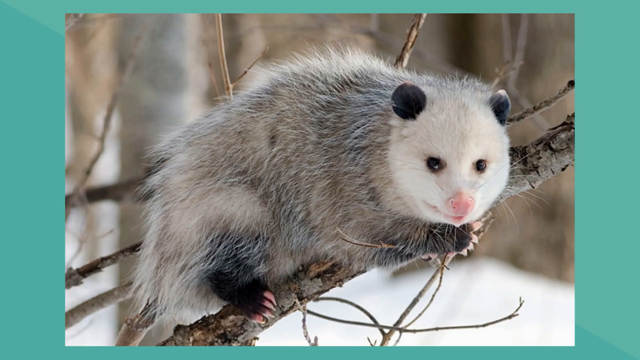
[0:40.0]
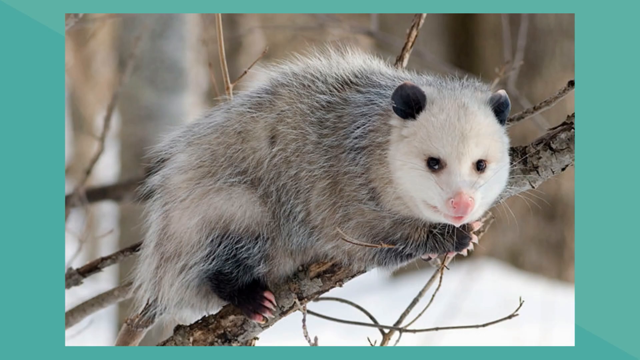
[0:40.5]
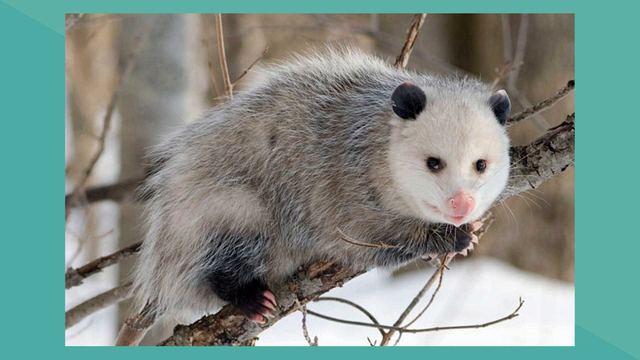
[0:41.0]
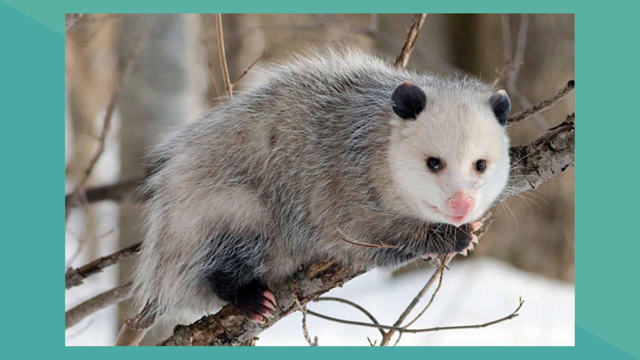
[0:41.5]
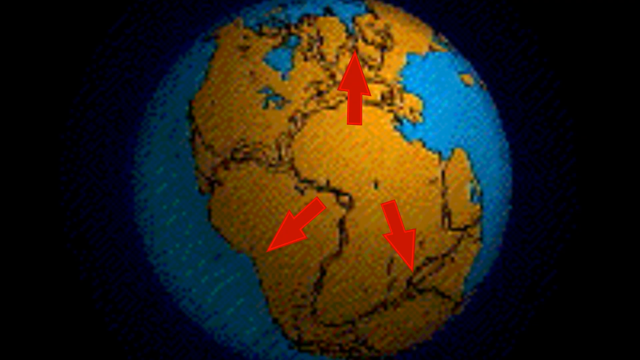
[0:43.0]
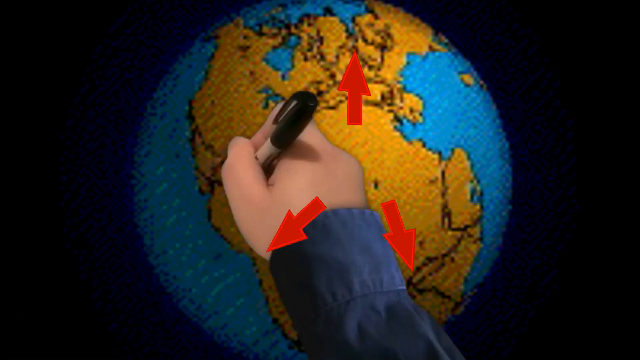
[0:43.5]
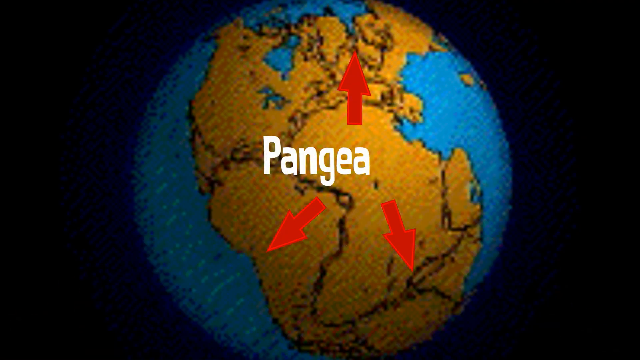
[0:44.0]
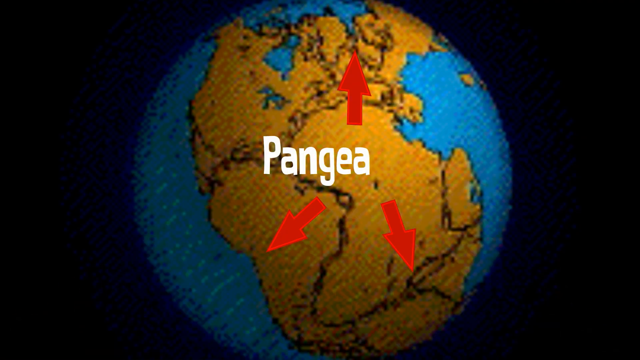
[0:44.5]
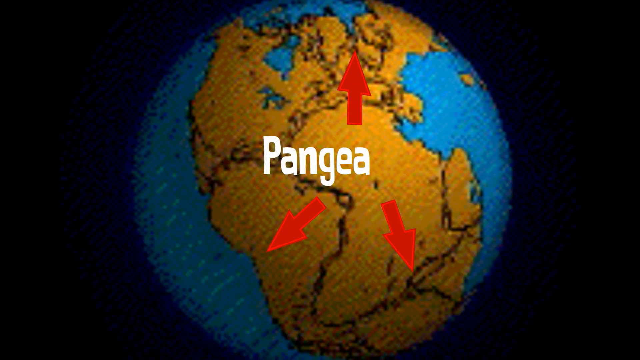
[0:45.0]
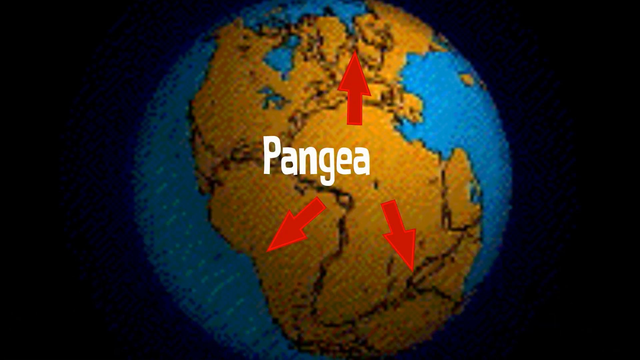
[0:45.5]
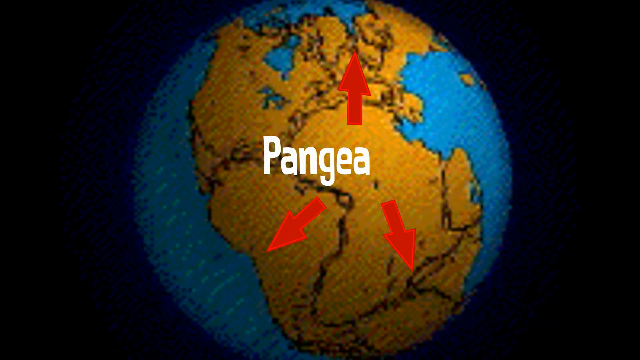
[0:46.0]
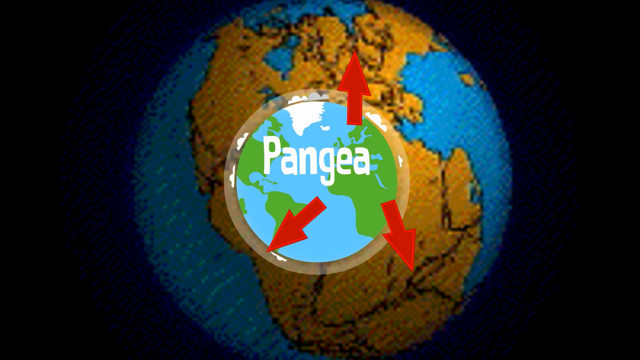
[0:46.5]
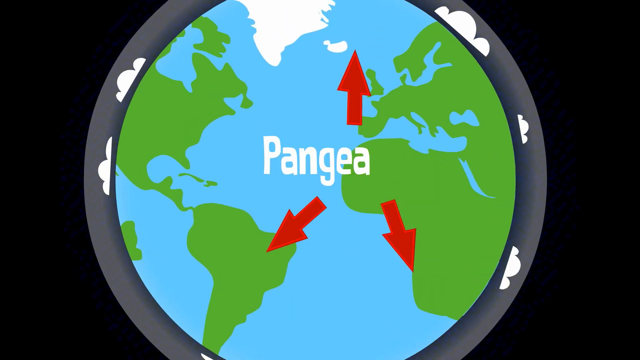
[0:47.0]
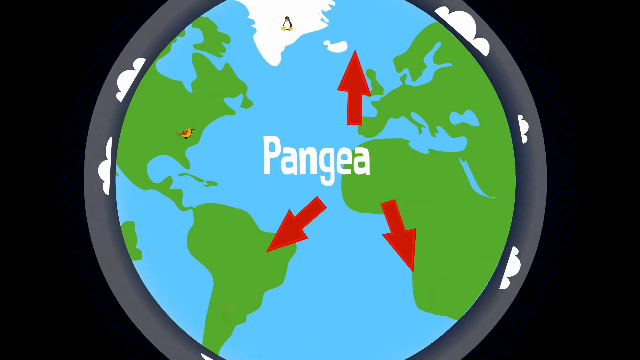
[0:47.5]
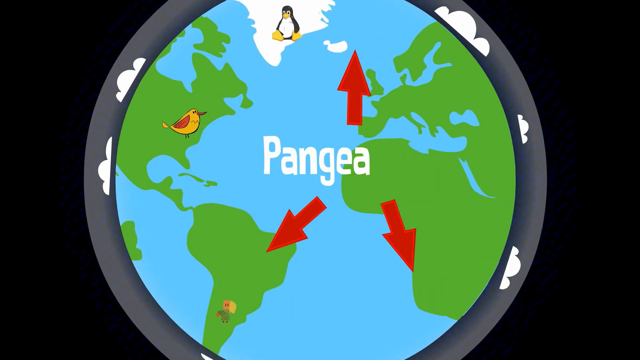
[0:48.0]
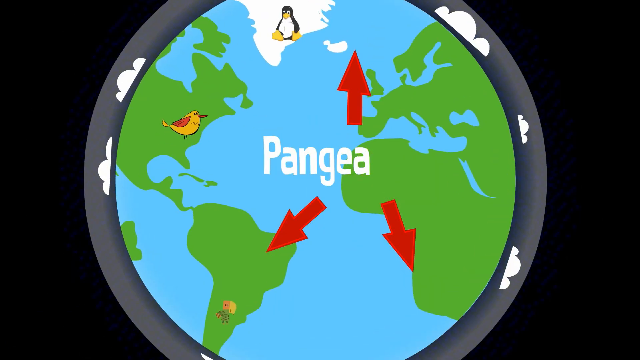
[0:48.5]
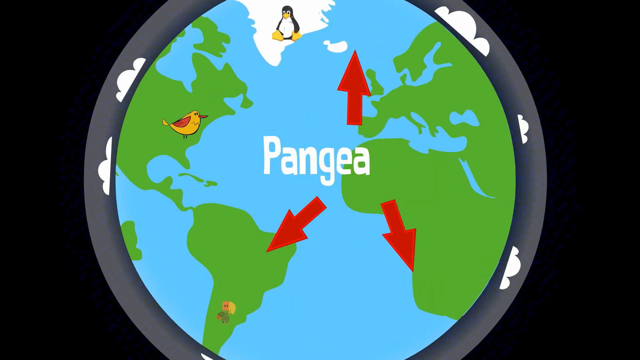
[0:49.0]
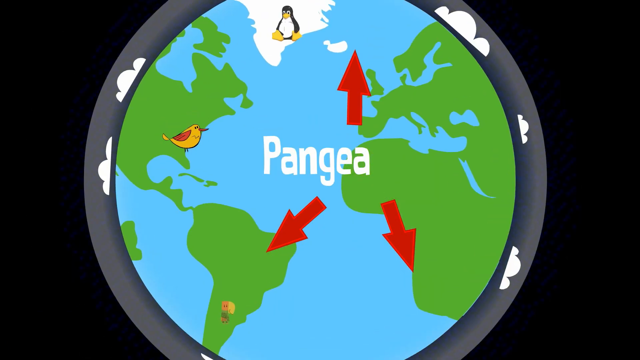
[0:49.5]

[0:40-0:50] An animal of some kind, possibly an opossum, is resting on a tree branch. It seems to be winter, since there is snow in the background, and the tree has no leaves. The animal is a greyish-brownish colour, with claws that are somewhat reddish and very extended, black eyes and a pair of black ears. Then a hand suddenly draws a planet, the world Pangea, with all the continents together, showing where each continent is going to travel. After Pangea, the continents are separated, and a few animals belong to each continent.